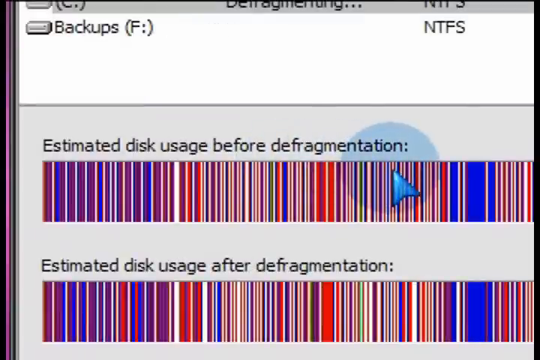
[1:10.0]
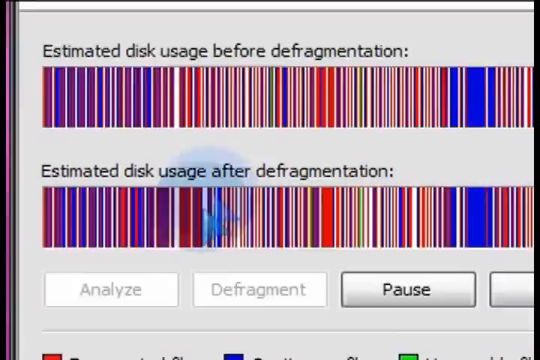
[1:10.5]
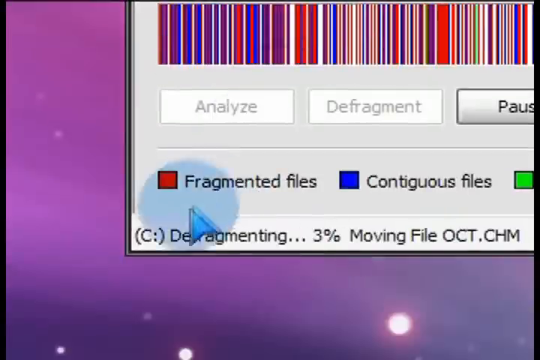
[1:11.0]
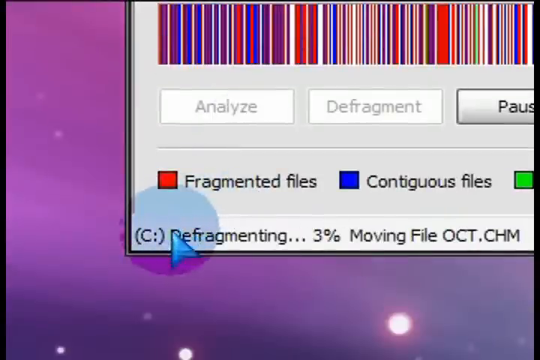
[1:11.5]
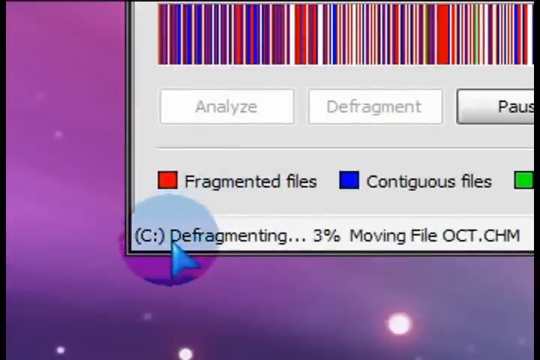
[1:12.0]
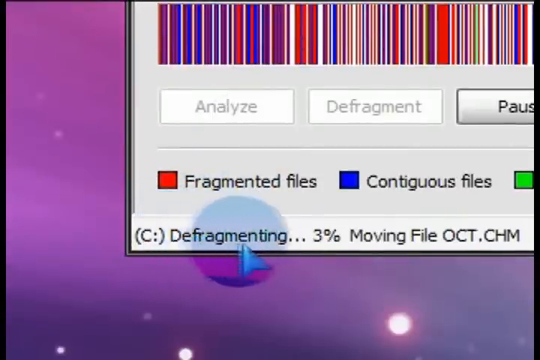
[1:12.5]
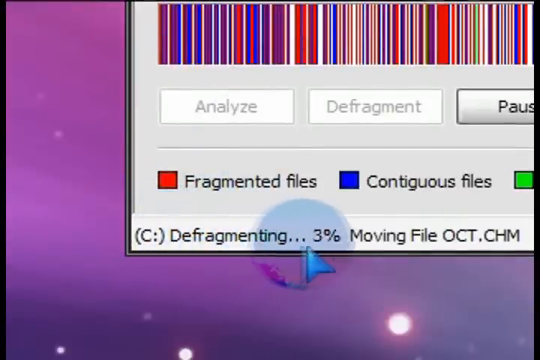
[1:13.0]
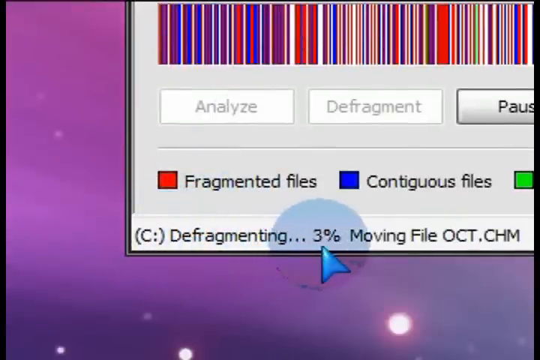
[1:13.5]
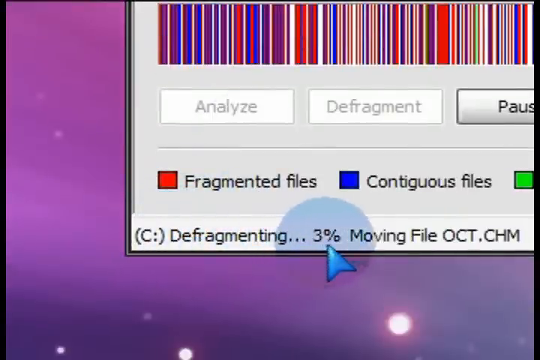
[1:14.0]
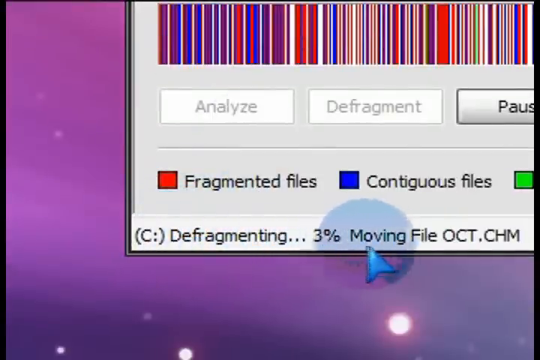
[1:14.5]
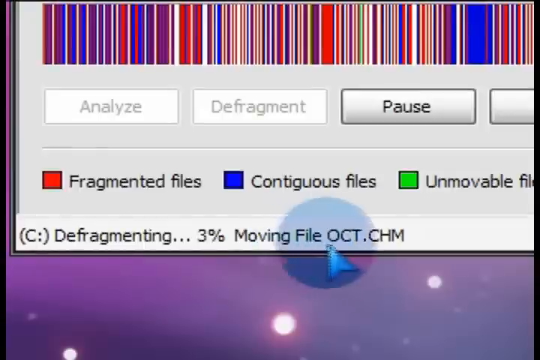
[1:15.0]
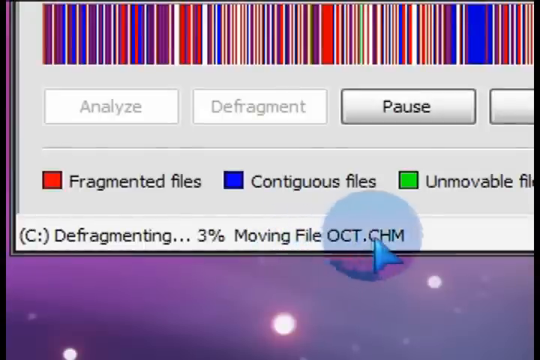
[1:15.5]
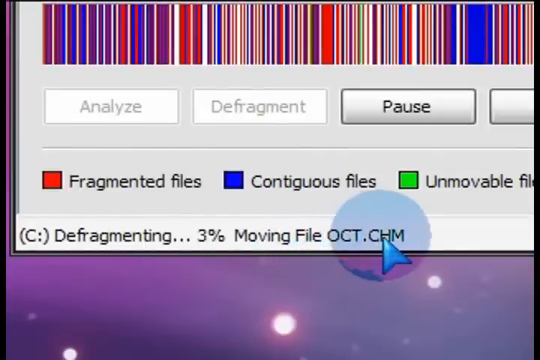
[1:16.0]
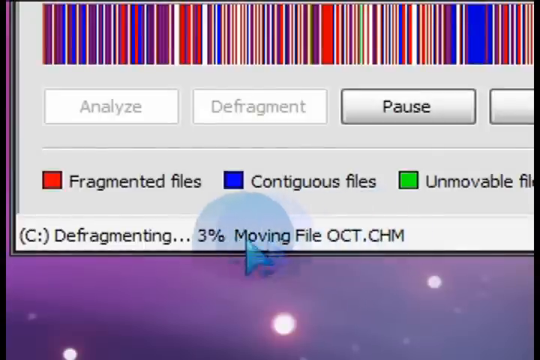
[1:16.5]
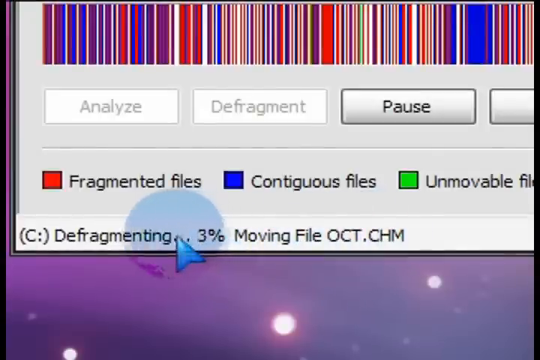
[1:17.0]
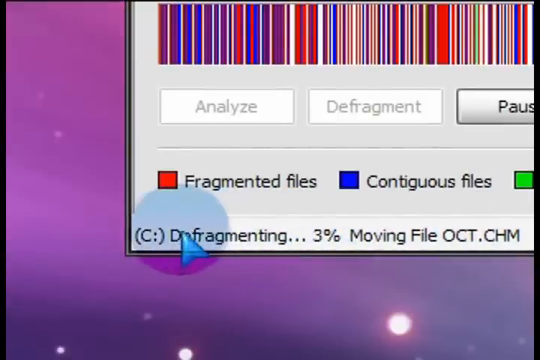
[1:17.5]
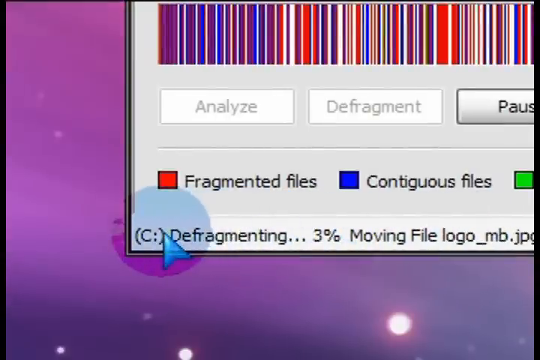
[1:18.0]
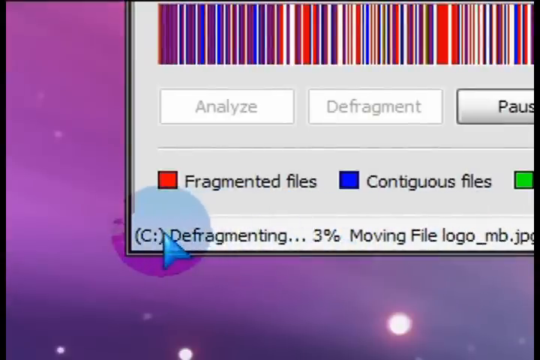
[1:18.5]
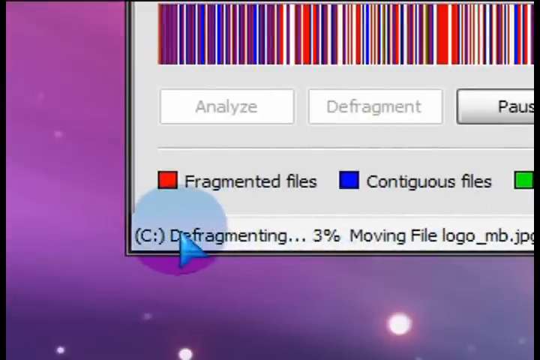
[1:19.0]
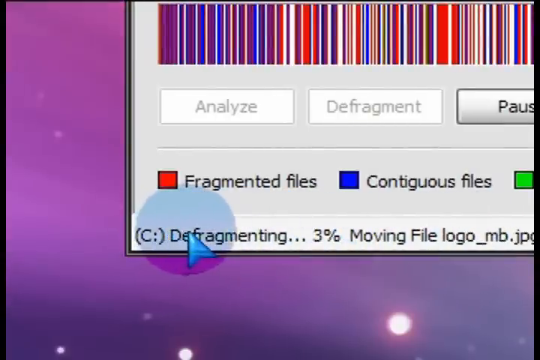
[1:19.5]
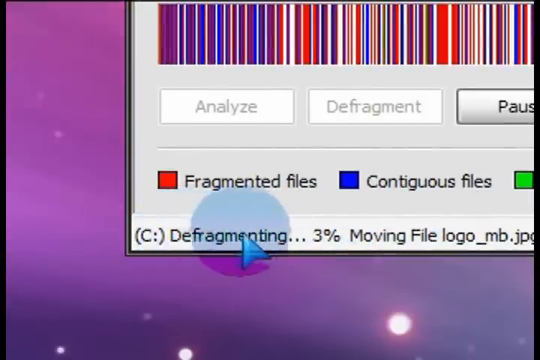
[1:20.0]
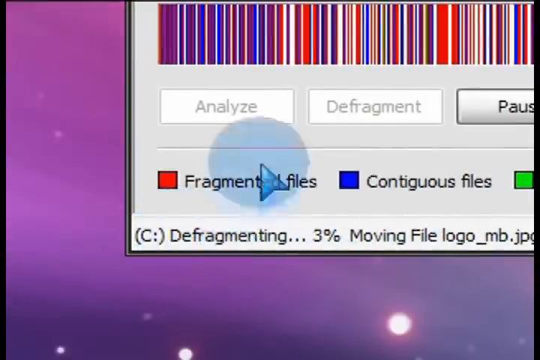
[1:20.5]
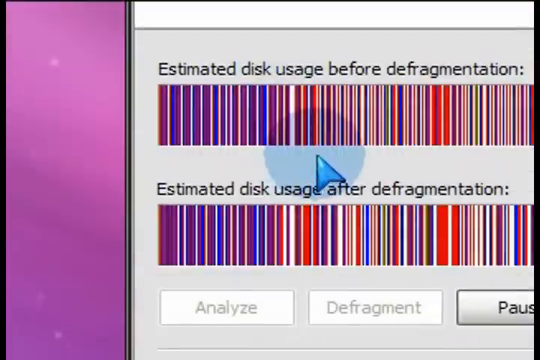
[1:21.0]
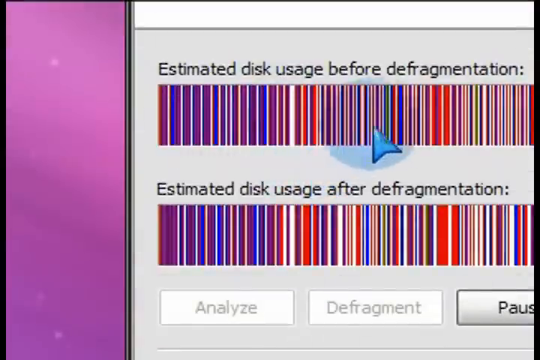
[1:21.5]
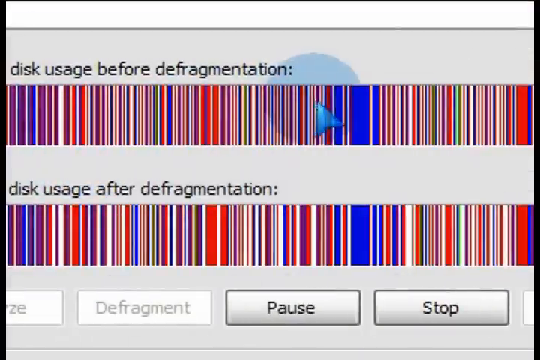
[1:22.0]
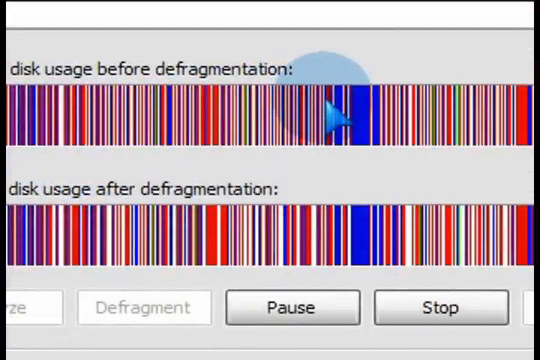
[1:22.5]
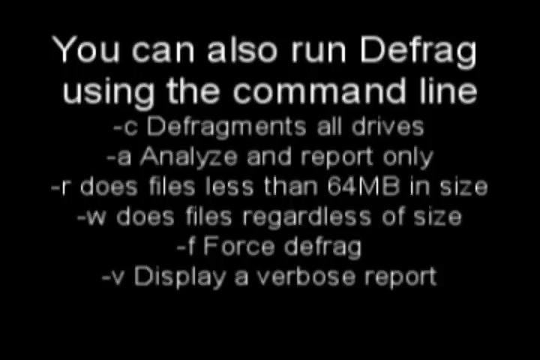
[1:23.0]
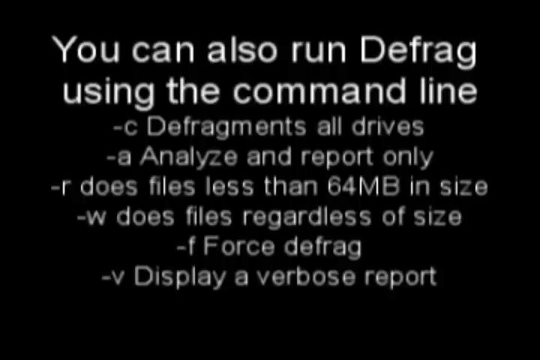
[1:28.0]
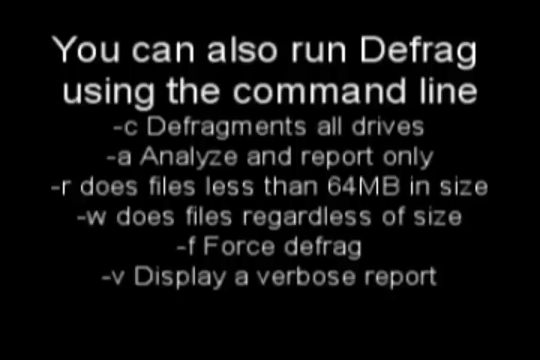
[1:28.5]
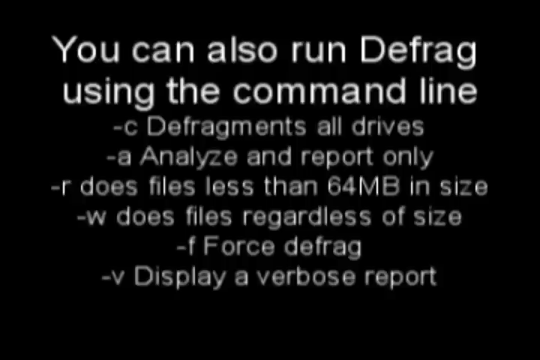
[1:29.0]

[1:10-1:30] Drive C is being defragmented, at 3%, with messages for moving the file OCT.chm and moving a logo file. Text then shows that defrag can also be run from the command line, listing options such as defragmenting all drives, "analyze and report only," defragmenting files less than 64 megabytes in size, defragmenting files regardless of size, forcing defrag, and displaying verbose reports. At the bottom, while defragmentation takes place and the movement is shown, there are Pause and Stop buttons. The difference between the before-defragmentation and after-defragmentation displays is shown.